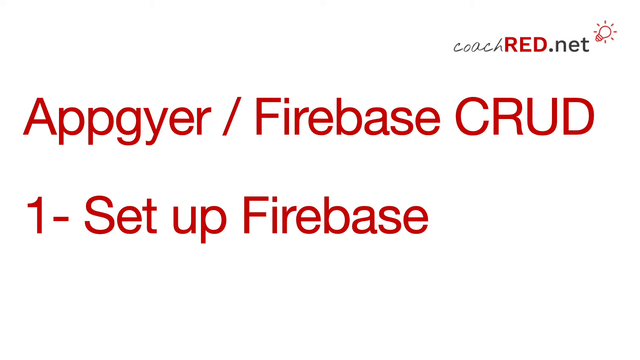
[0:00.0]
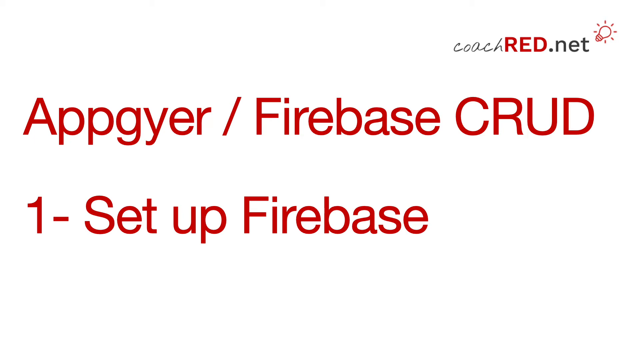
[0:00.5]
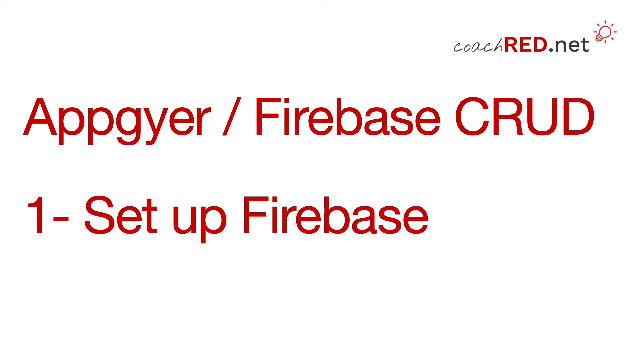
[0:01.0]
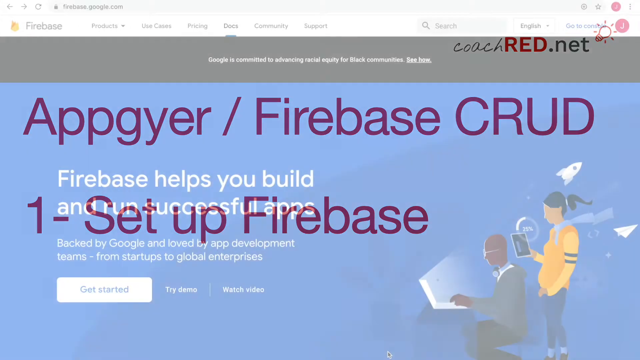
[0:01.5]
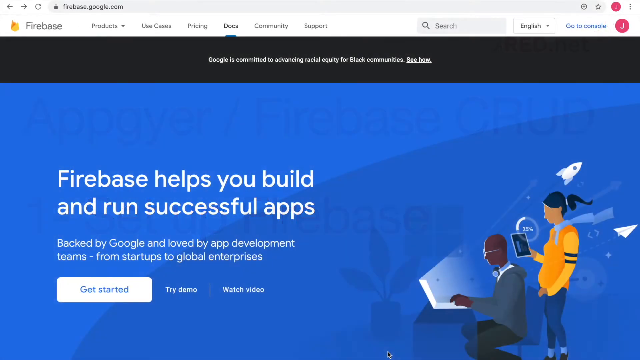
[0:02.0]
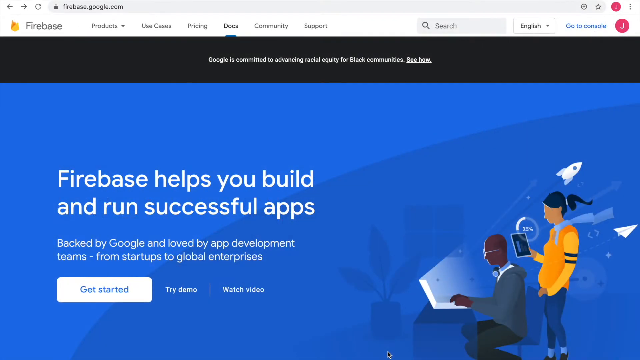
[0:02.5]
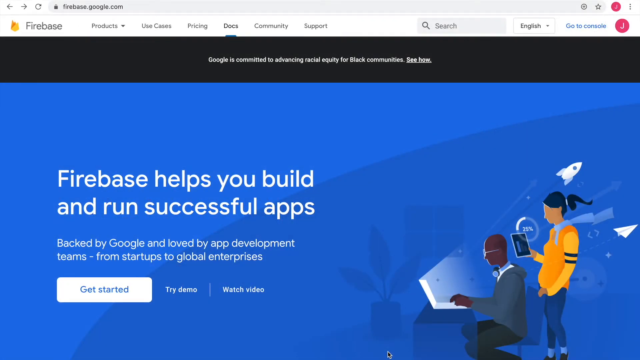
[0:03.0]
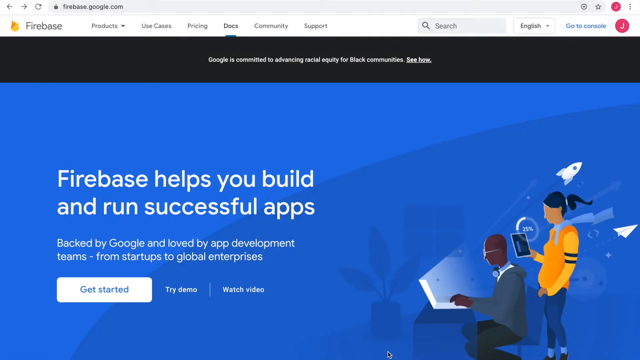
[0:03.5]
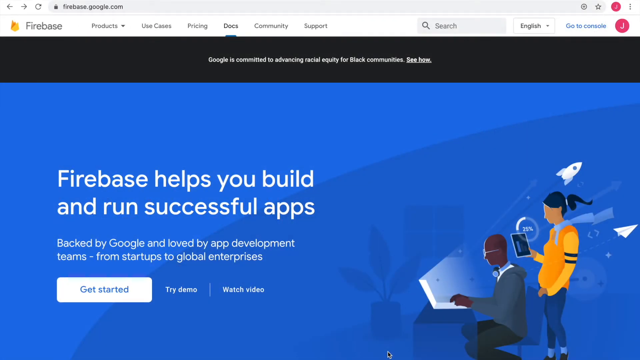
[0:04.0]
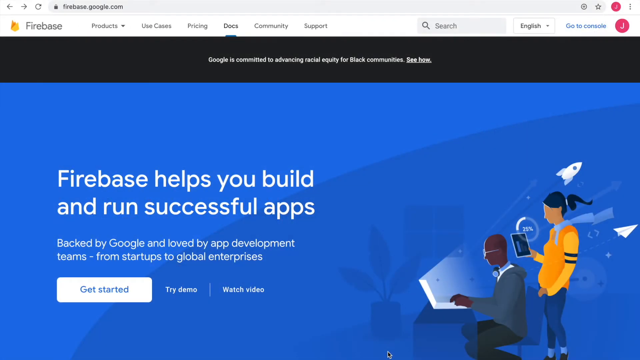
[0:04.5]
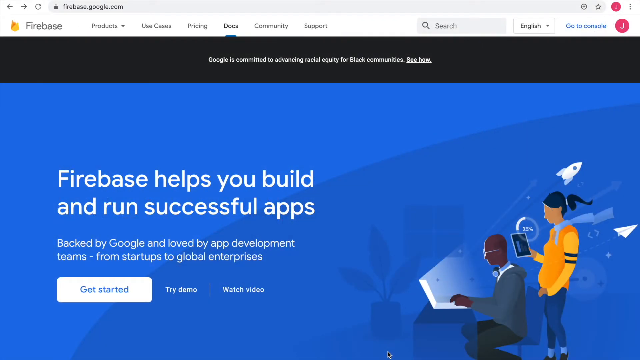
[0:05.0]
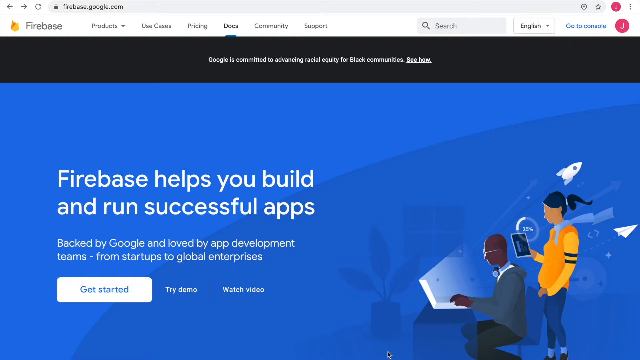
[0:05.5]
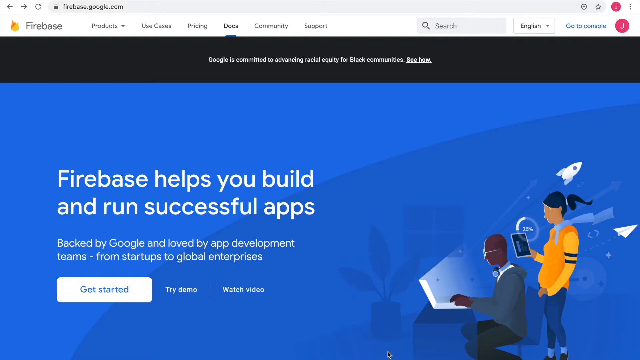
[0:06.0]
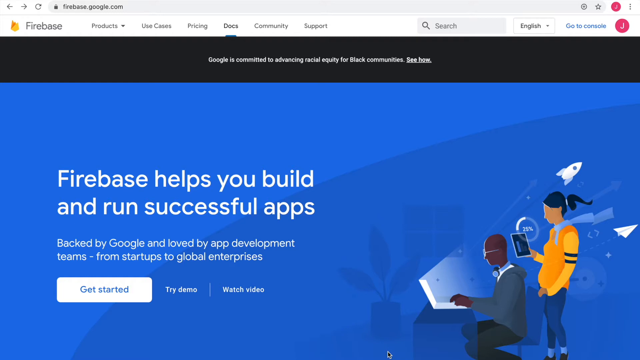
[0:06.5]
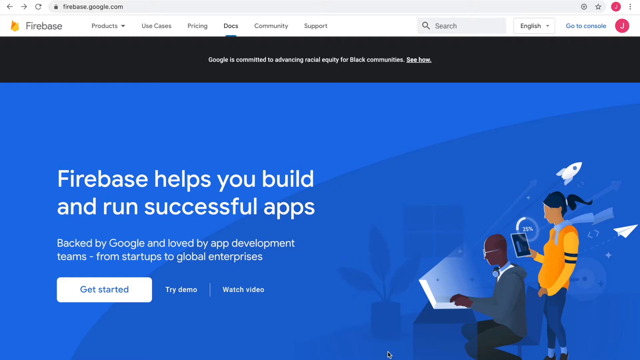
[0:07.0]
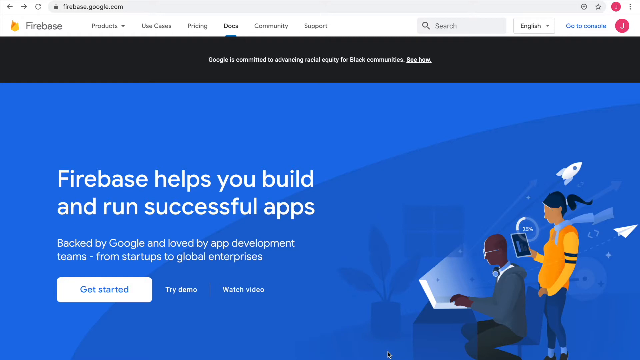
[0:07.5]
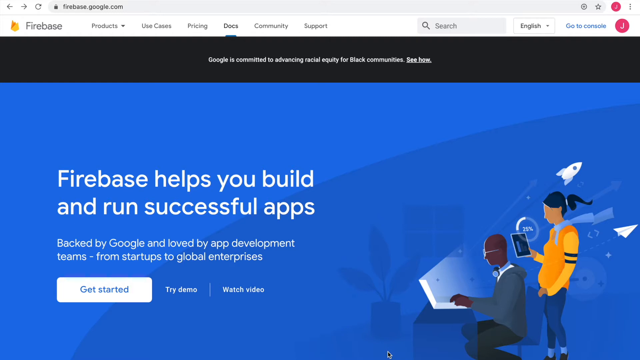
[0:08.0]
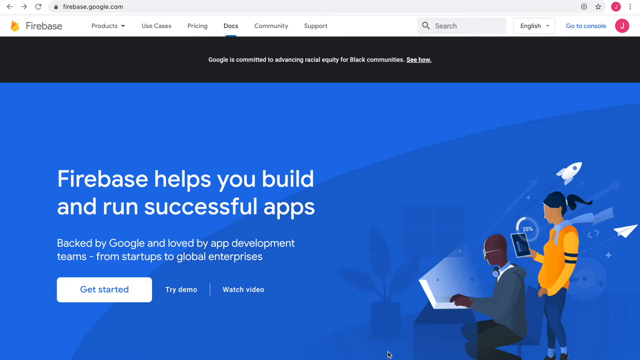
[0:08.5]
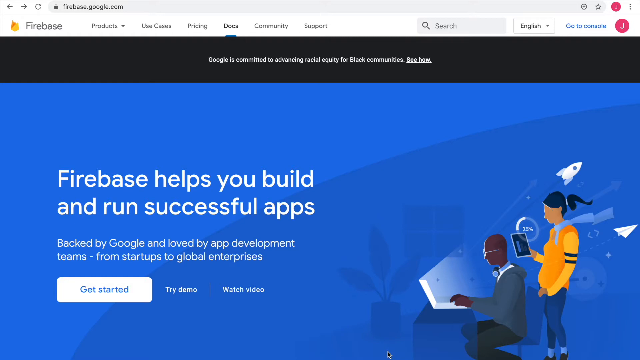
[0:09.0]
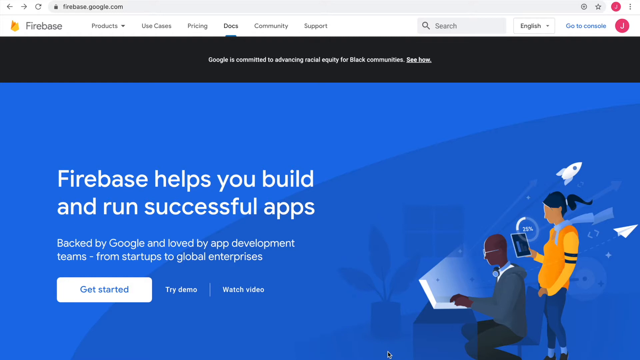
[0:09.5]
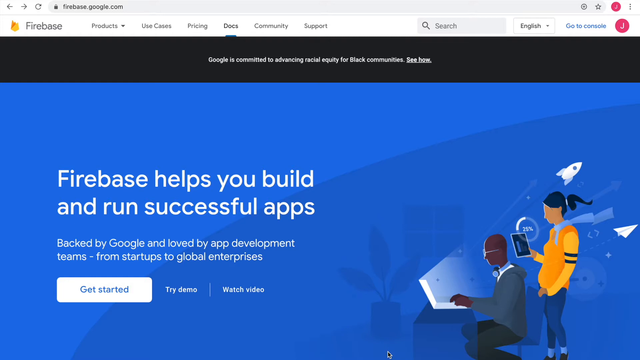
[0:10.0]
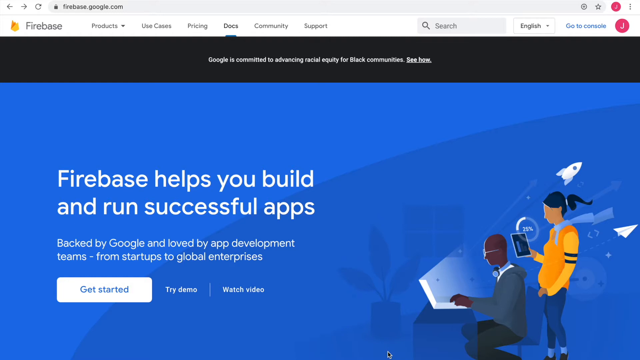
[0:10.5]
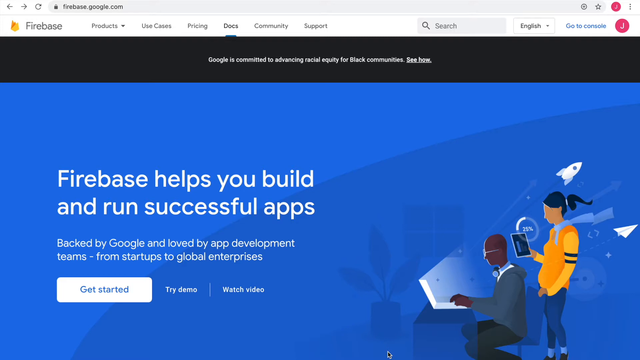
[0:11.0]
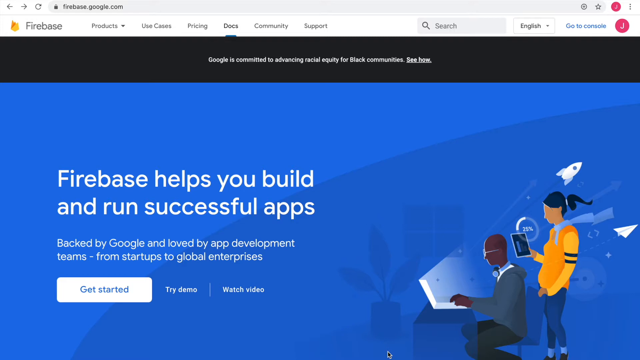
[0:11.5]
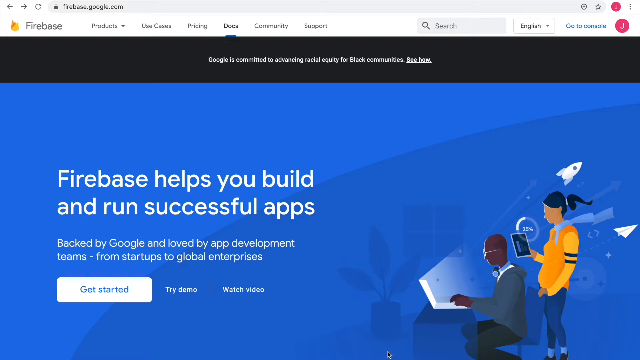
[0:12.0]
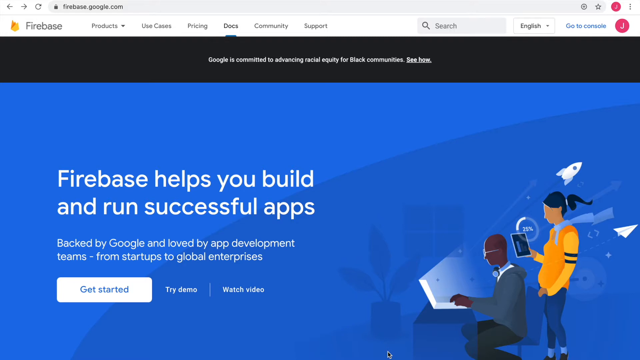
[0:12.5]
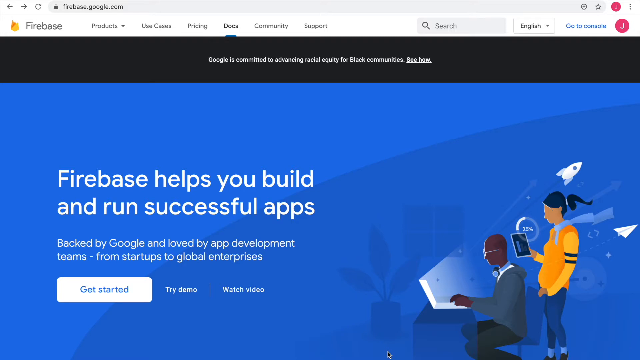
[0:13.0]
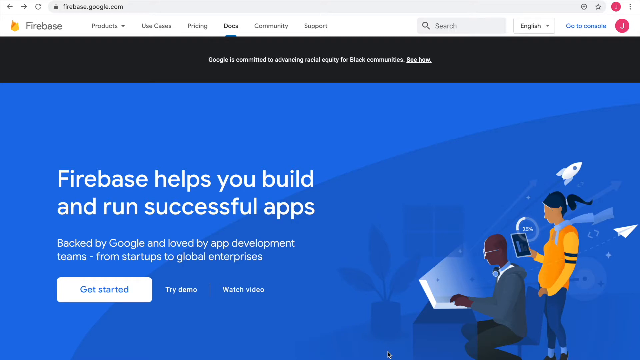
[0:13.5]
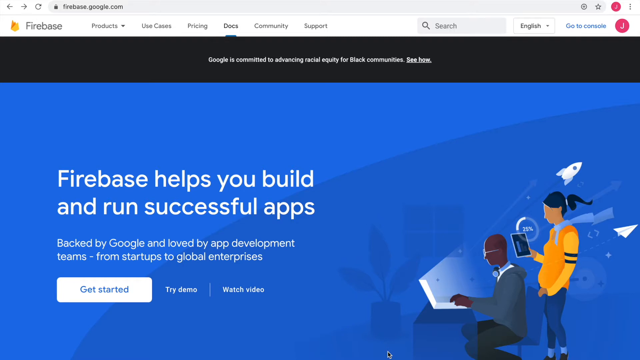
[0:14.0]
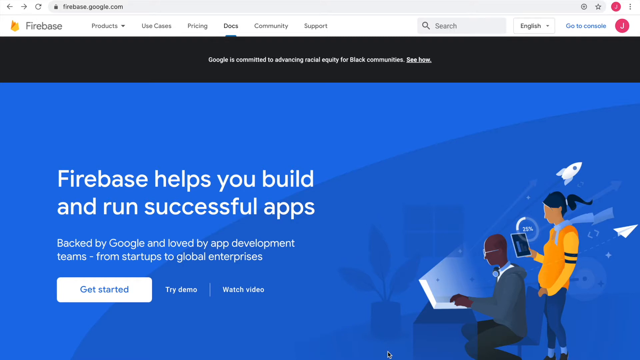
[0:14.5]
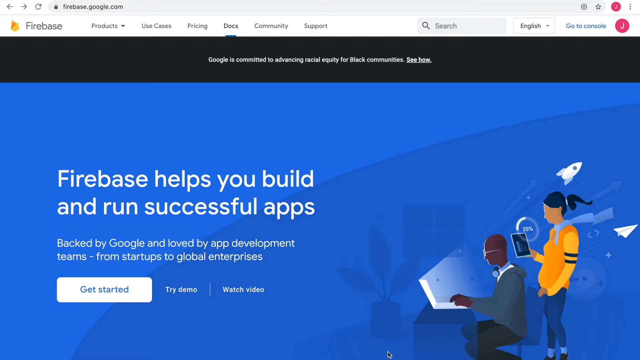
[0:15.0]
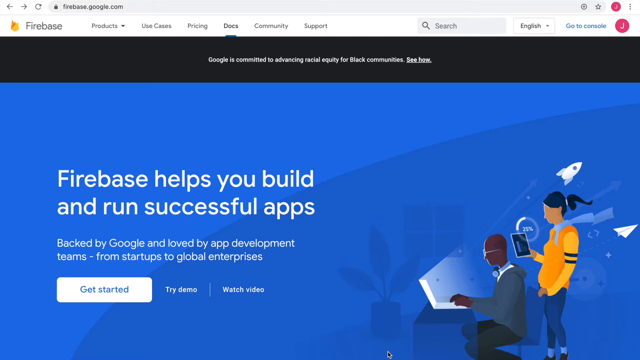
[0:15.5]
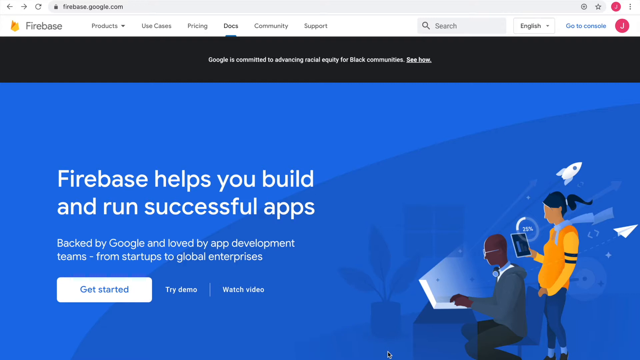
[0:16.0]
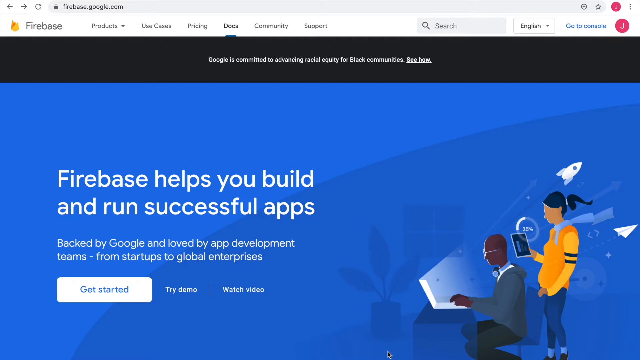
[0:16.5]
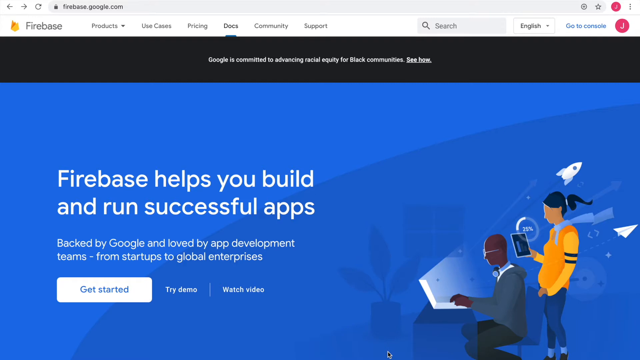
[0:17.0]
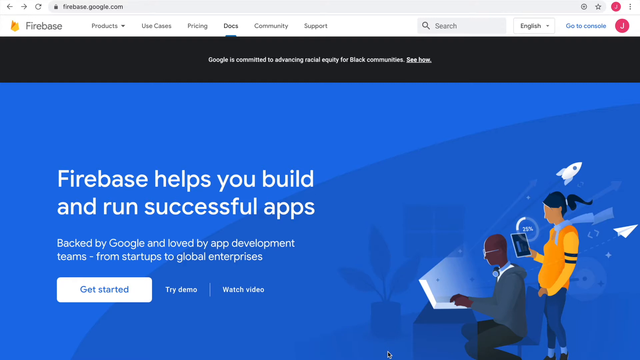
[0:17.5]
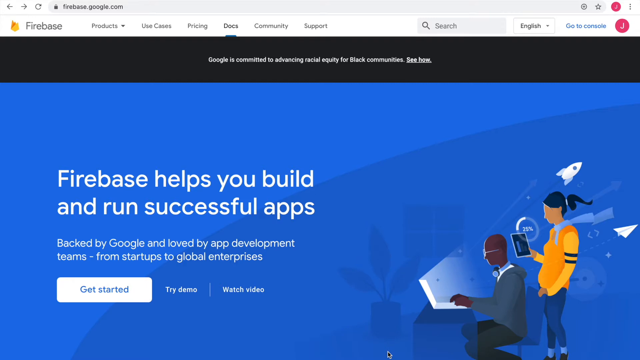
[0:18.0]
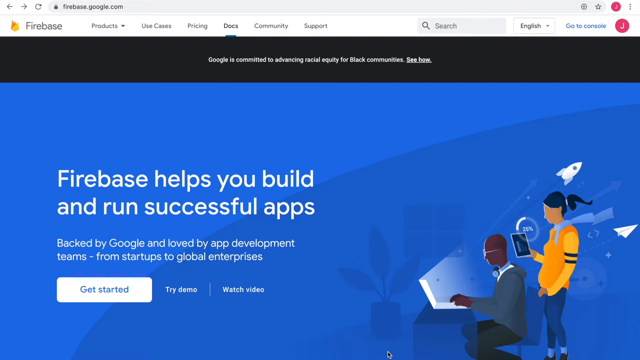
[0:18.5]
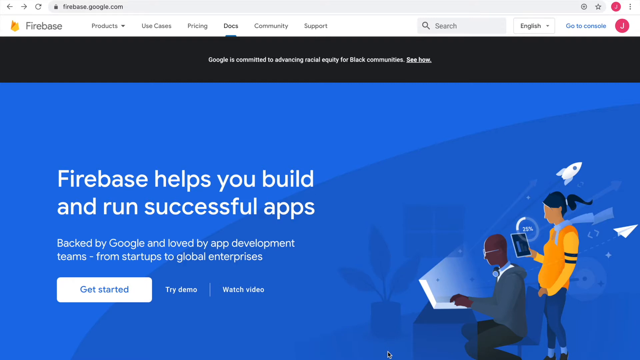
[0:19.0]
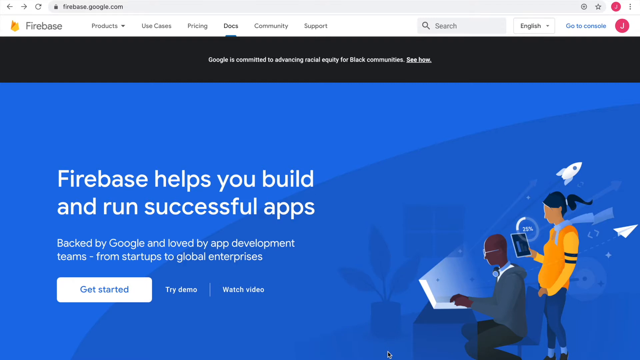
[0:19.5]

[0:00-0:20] The video opens on a website that appears to be firebasegoogle.com, with the Firebase logo in the top left-hand corner. The page says "Firebase helps you build and run successful apps backed by Google and loved by app development teams from start-ups to global enterprises" and shows options to get started and to try a demo and watch videos. To the right side of the screen is an animation featuring two individuals: a woman in a yellow outfit with stripes on her arms, and a man sitting at a desk with a desktop computer, with a light flashing back towards him. Behind the people there appears to be a rocket, a paper plane and an arrow making a motion.